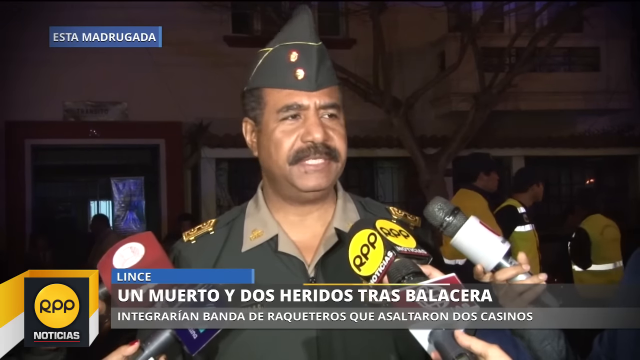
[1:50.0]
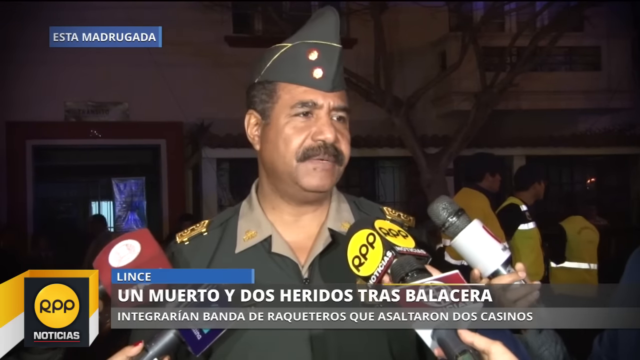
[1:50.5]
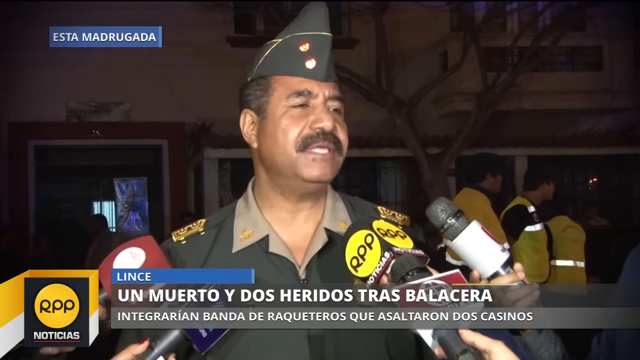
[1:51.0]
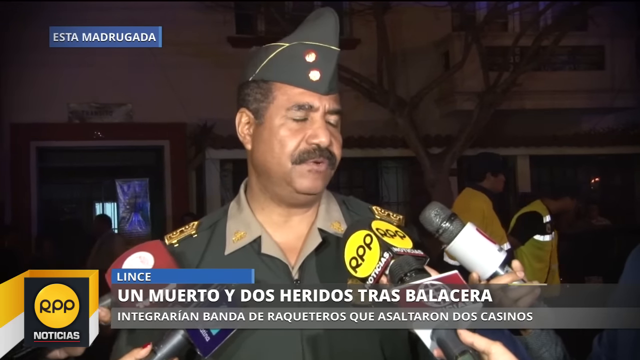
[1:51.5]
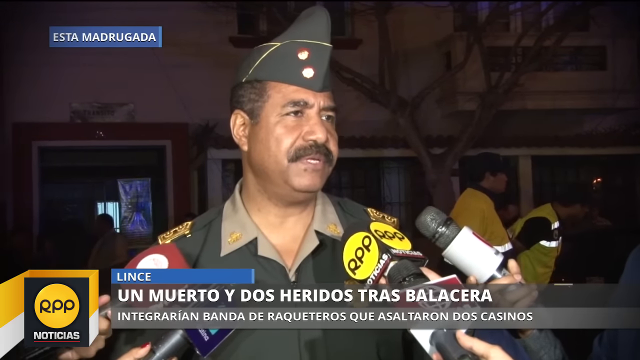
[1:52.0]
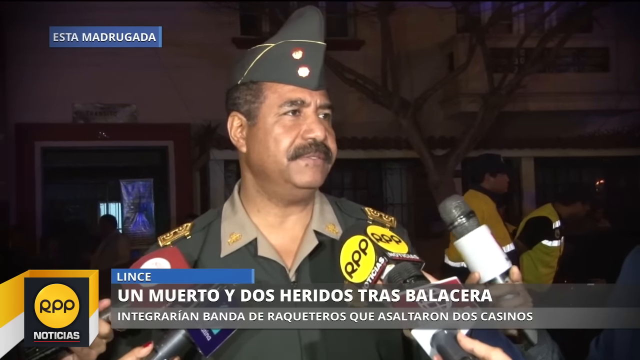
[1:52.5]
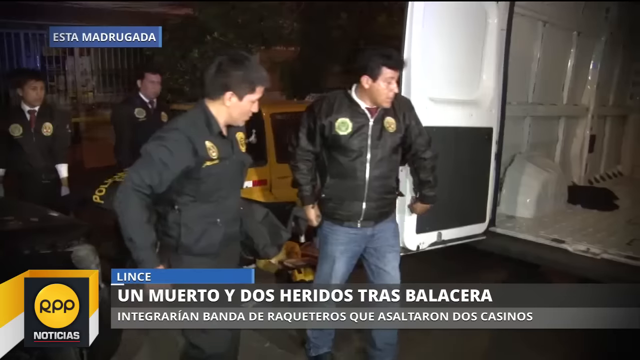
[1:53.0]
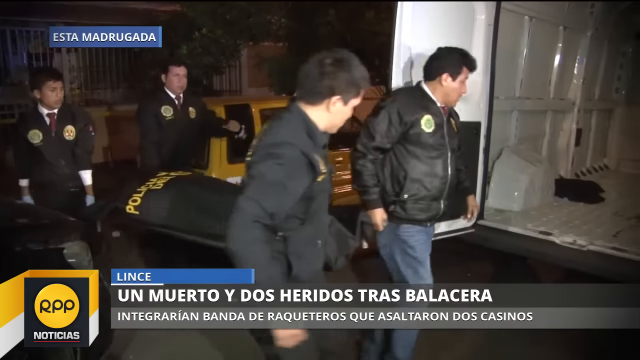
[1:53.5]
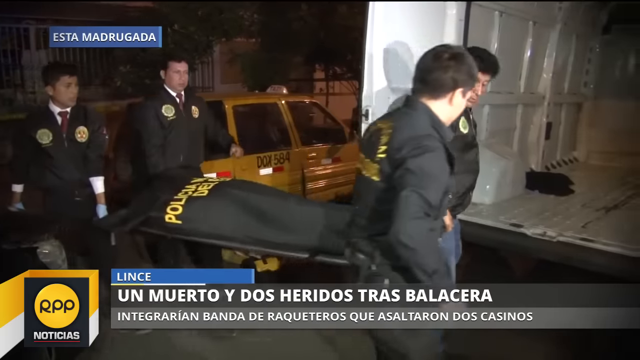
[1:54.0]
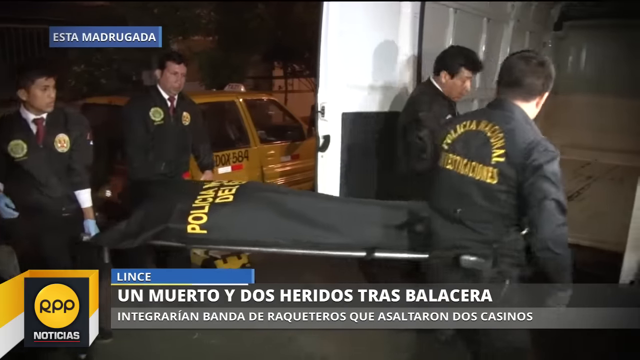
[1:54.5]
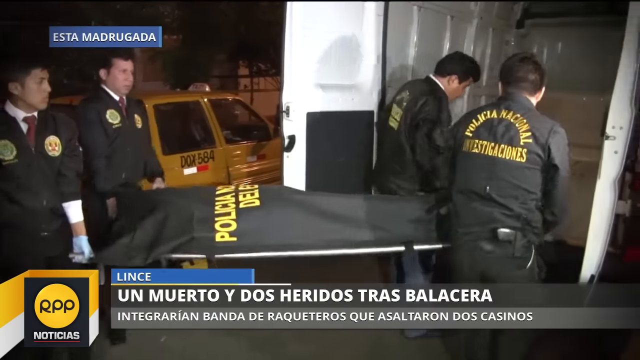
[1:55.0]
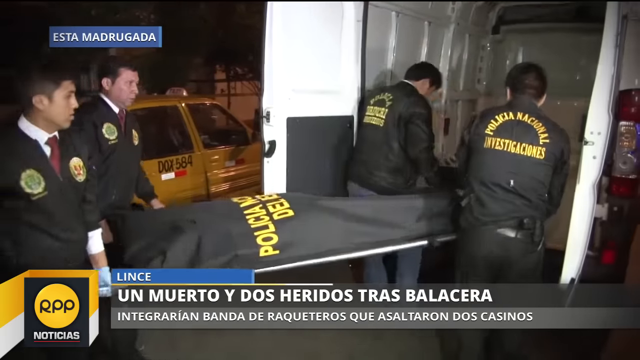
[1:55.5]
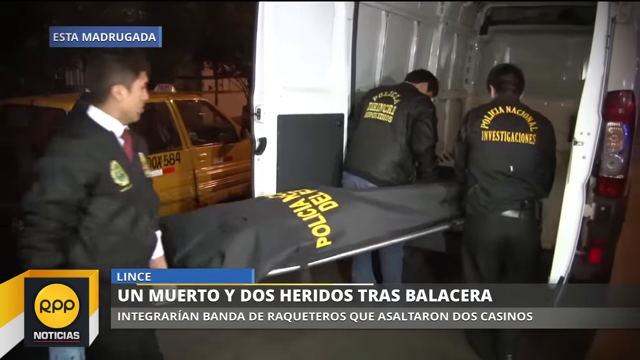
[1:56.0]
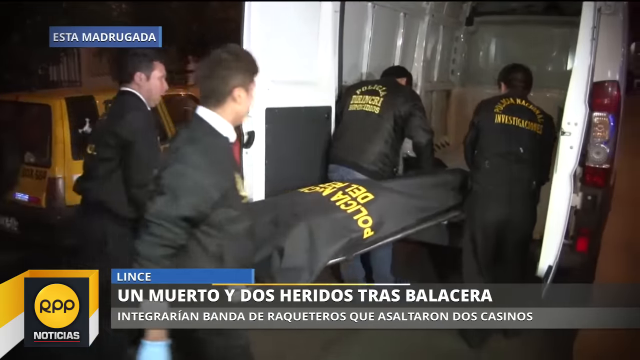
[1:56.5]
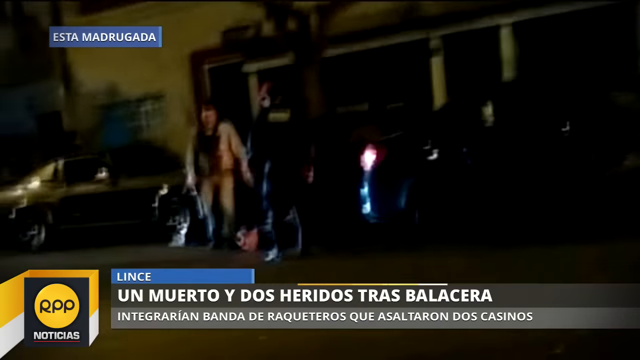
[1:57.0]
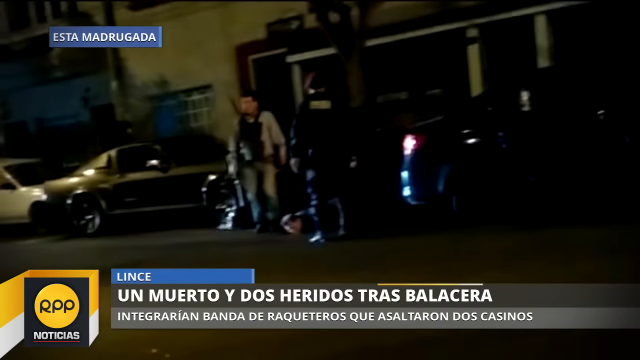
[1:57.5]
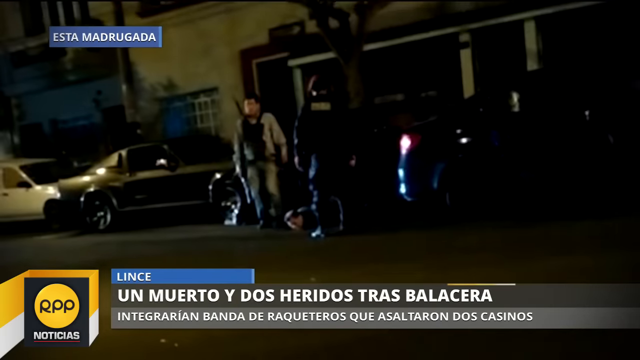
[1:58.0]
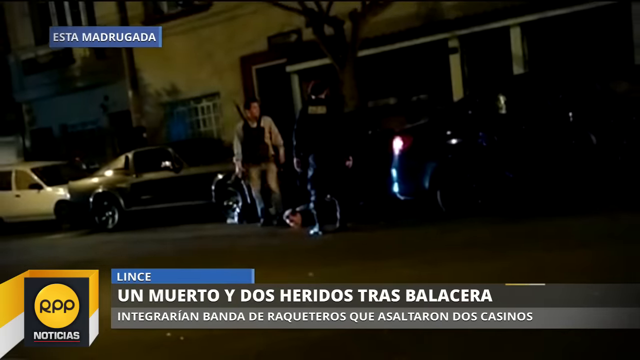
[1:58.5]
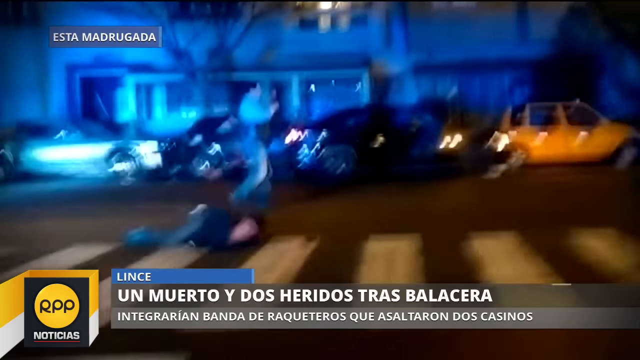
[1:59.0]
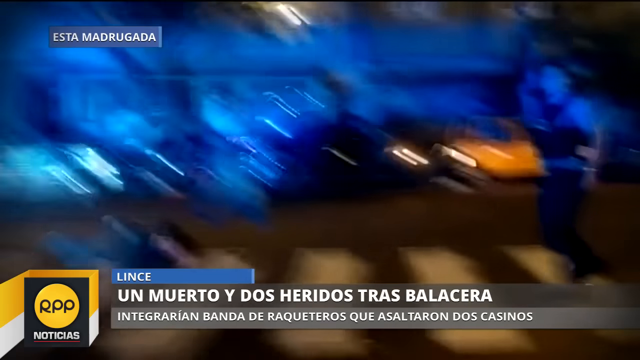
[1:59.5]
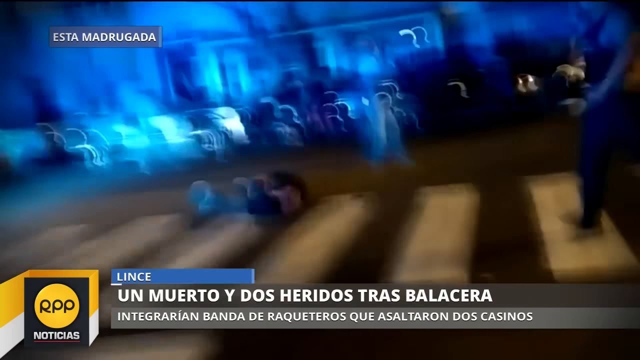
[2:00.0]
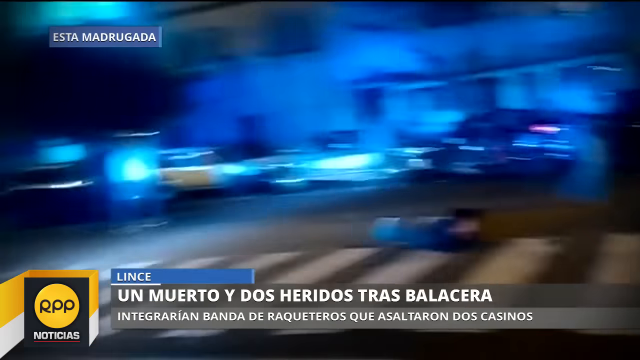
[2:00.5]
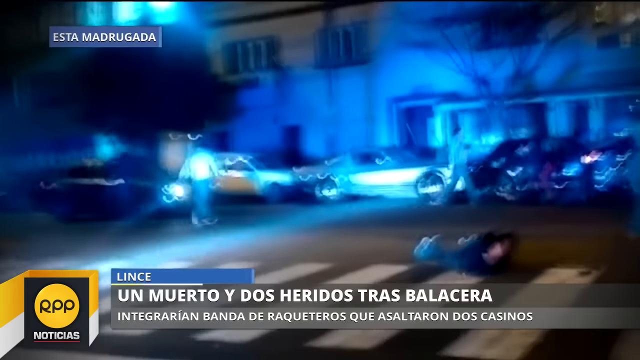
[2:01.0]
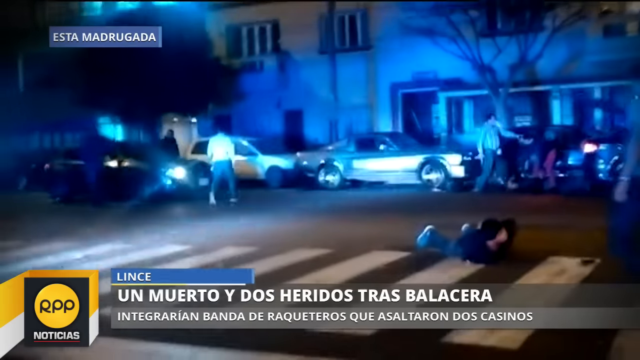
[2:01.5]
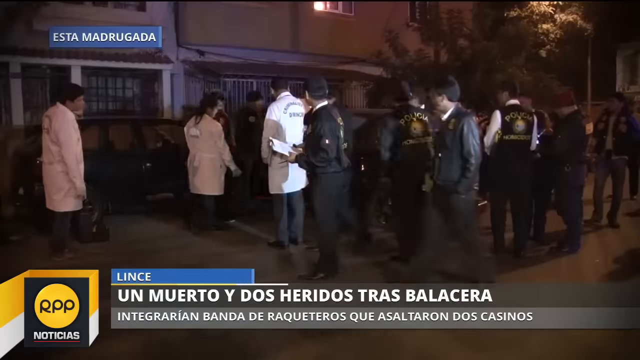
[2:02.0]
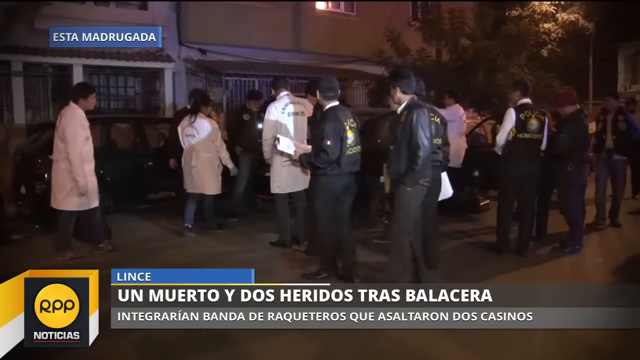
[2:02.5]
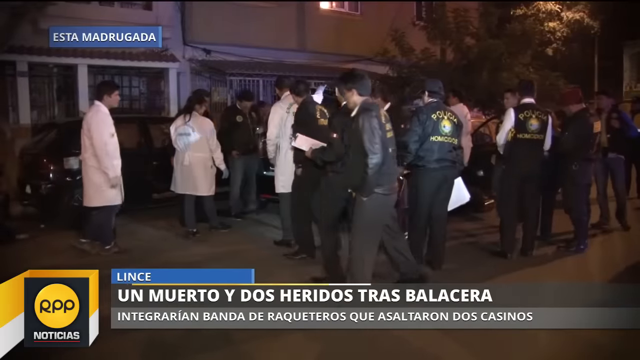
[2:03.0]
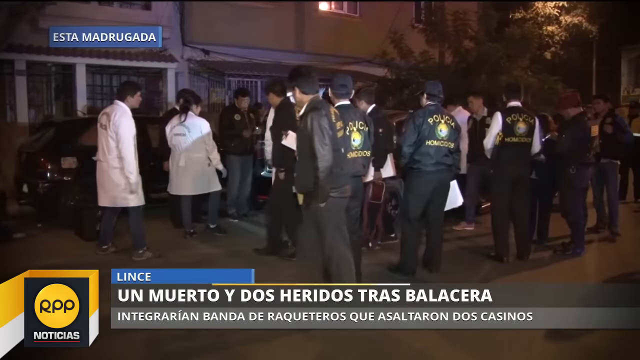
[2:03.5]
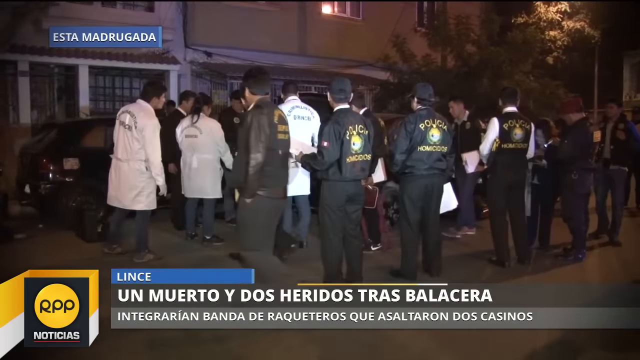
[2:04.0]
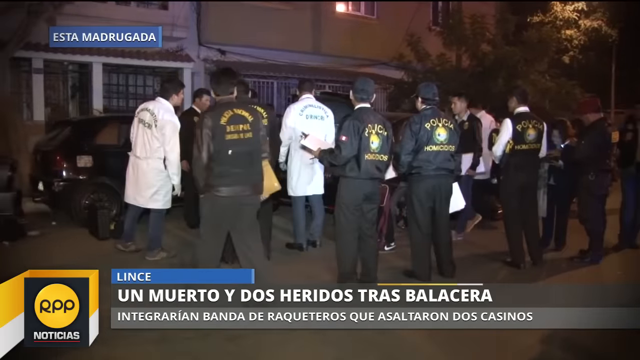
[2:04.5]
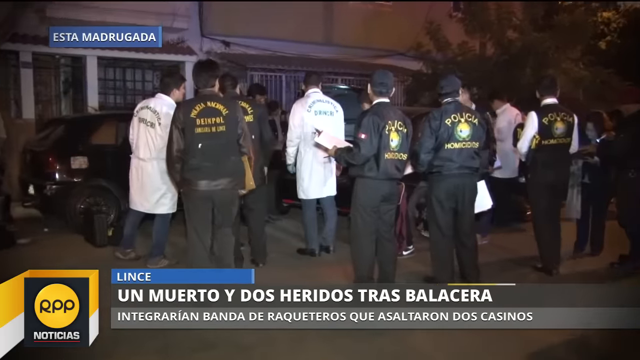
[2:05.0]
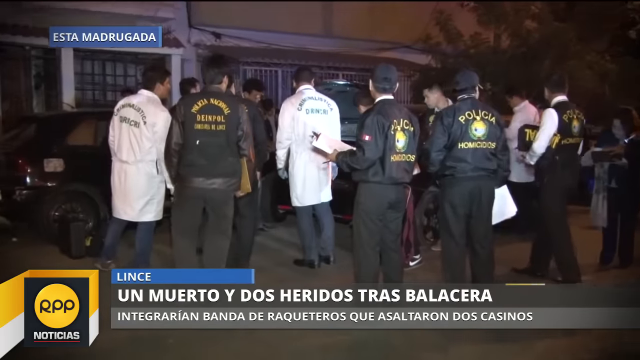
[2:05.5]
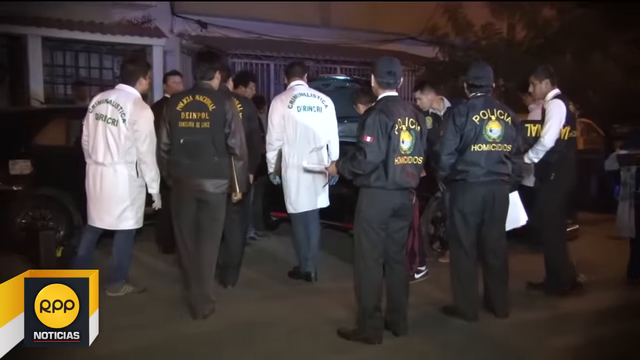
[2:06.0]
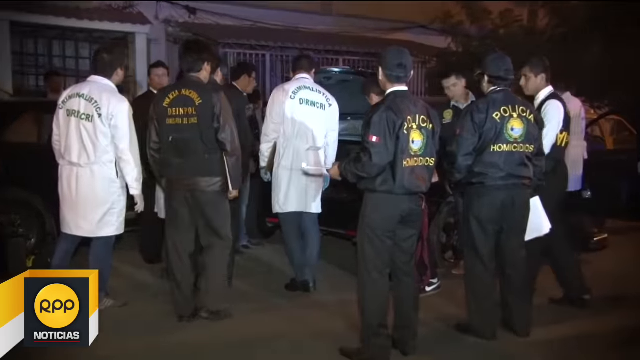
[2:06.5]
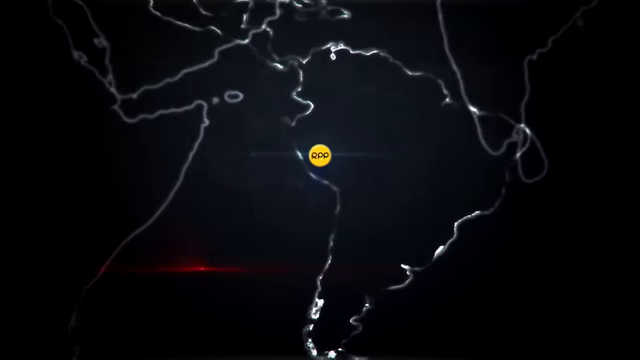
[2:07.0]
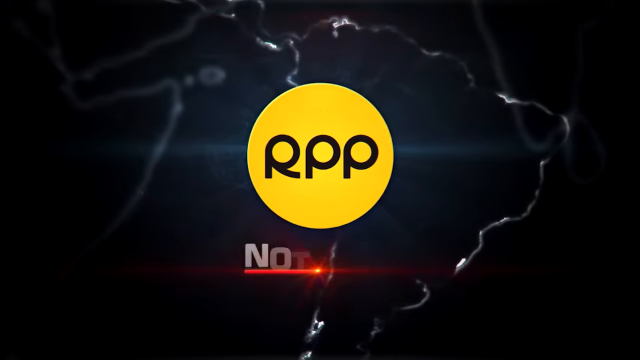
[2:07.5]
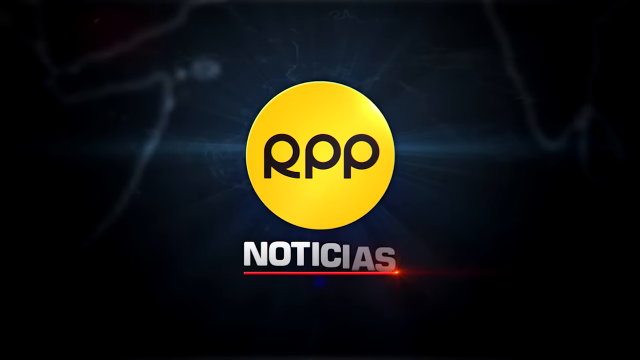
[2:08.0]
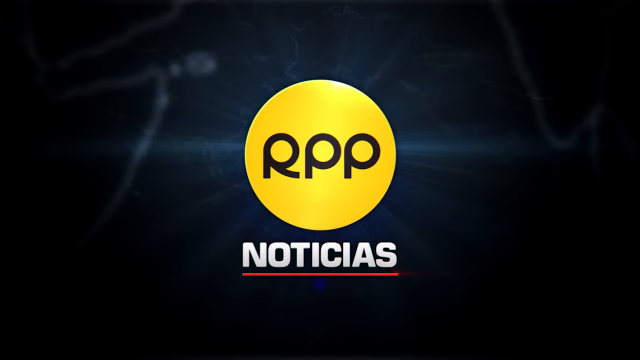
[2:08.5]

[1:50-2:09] An interview segment shows a military official standing in the center of the screen: a dark-skinned man with dark brown hair and a dark brown mustache, wearing military regalia, a green uniform and a green military cap. He stands in front of a number of storefronts, with a tree over his left shoulder on the right side of the screen and a number of other officials in hazard vests. Reporters with microphones are on his left and right, and he looks slightly to his left, toward the right side of the screen. A bright light shines on him, and he begins speaking while looking to his left at reporters. The video then shows four police carrying an individual in a body bag on a stretcher, one at each corner, wearing gloves and walking toward the back of a van, and they begin loading the stretcher into the van. A wide-angle shot of a street at night follows, with a couple of officials standing next to some vehicles in front of a storefront. Shaky body cam footage shows an individual on the ground on a crosswalk with their hands tied behind their back, while police walk around next to vehicles in front of storefronts, with sirens and lights blaring. Another scene shows police officials and lab technicians in white lab coats and gloves walking around a number of vehicles on the side of the street as the camera slowly zooms in. Finally a minimalist graphic of Central and South America appears, followed by the news logo "RPP" in black lettering in front of a yellow circle, with "Notitius" in white lettering at the bottom of the screen.